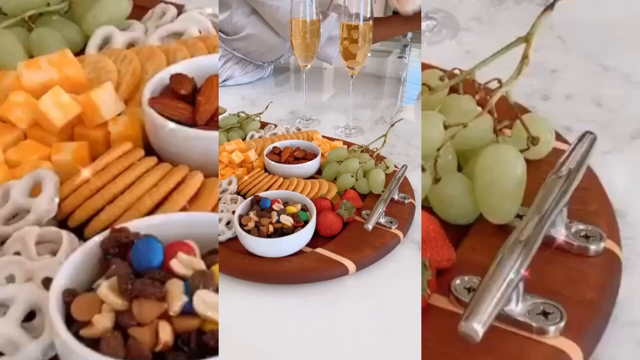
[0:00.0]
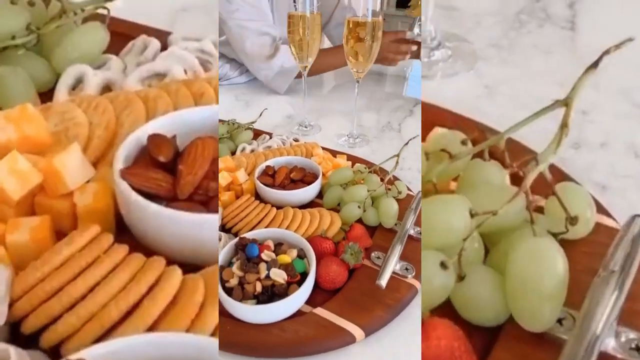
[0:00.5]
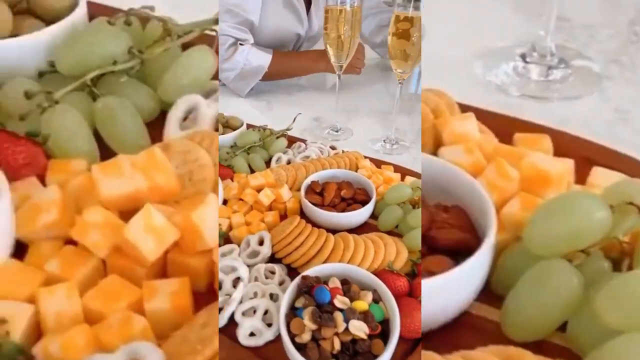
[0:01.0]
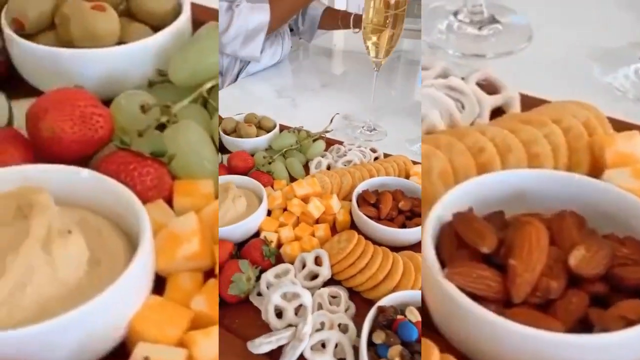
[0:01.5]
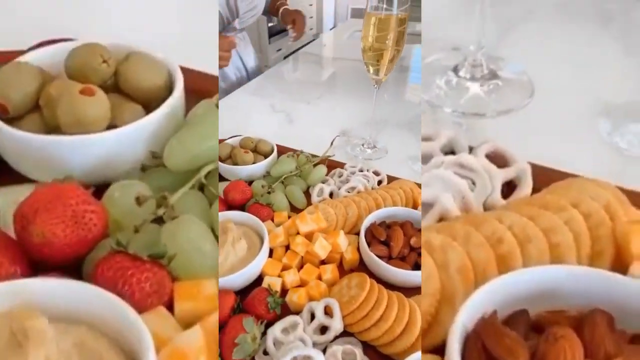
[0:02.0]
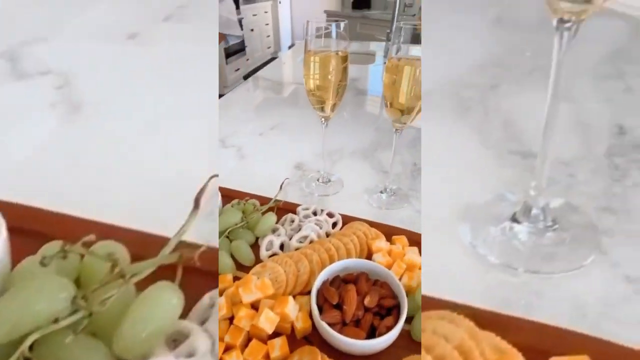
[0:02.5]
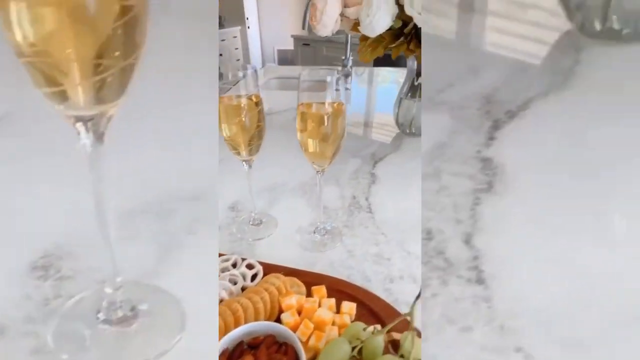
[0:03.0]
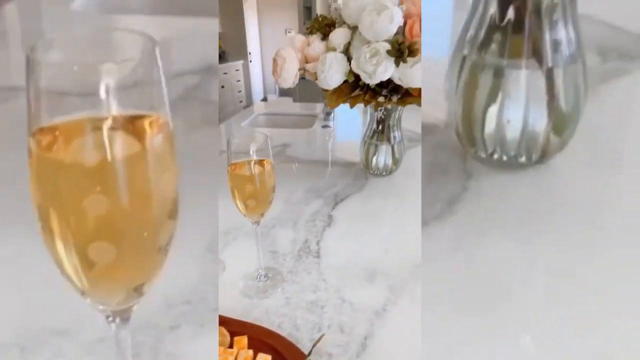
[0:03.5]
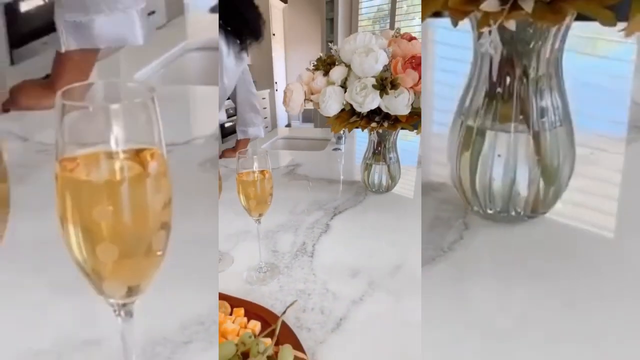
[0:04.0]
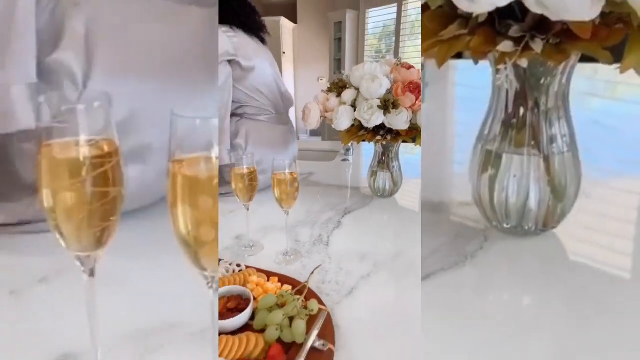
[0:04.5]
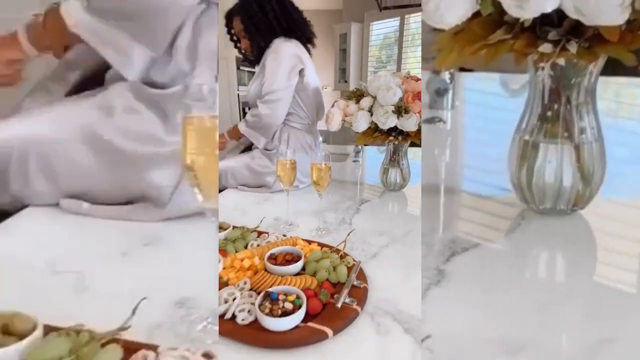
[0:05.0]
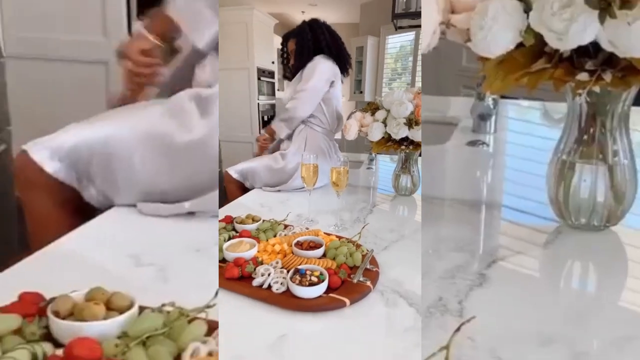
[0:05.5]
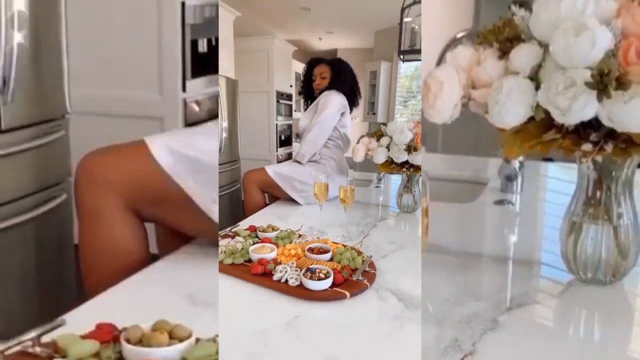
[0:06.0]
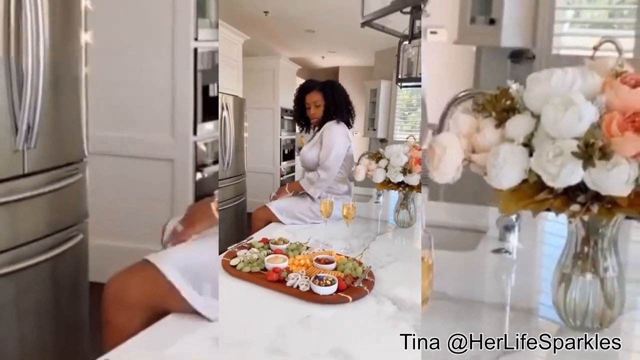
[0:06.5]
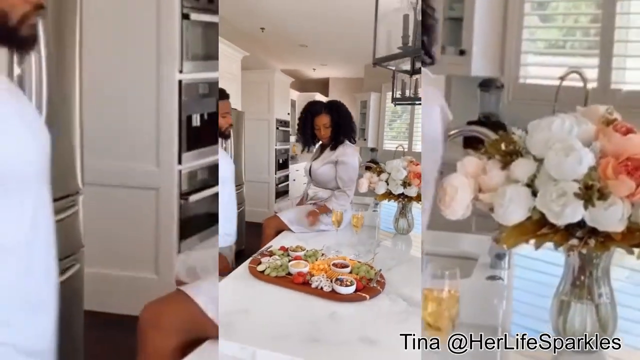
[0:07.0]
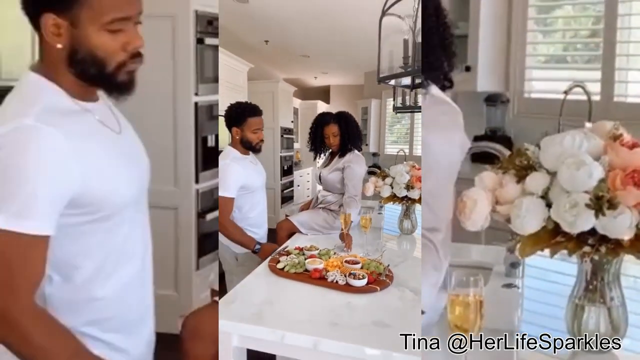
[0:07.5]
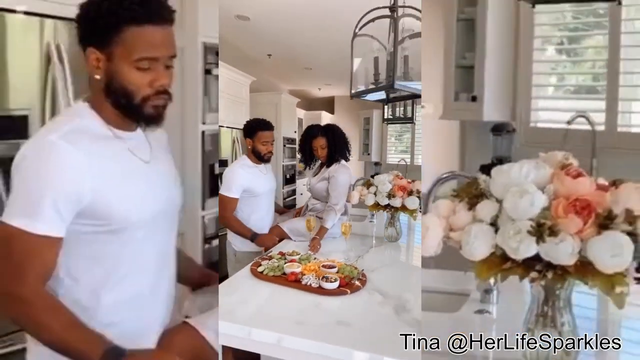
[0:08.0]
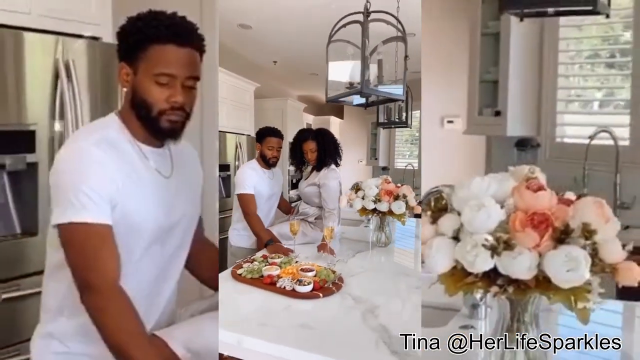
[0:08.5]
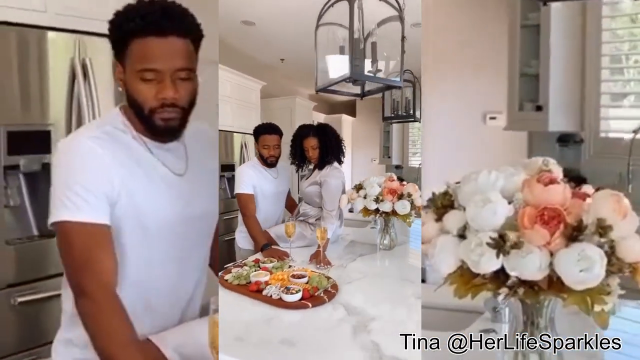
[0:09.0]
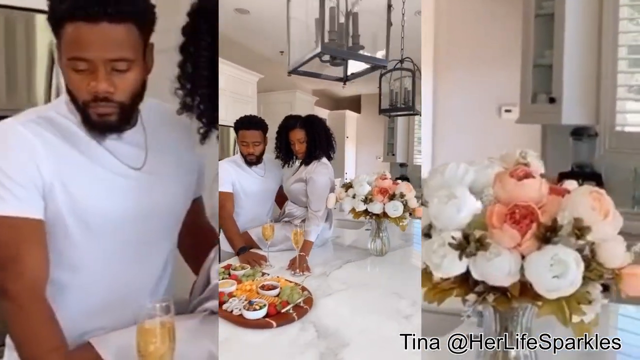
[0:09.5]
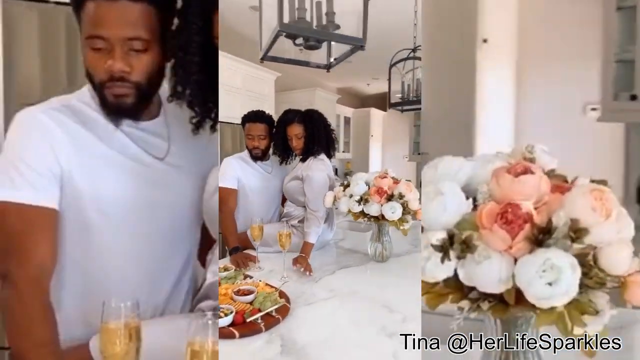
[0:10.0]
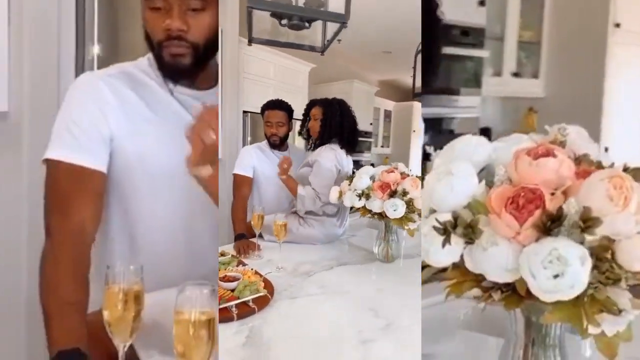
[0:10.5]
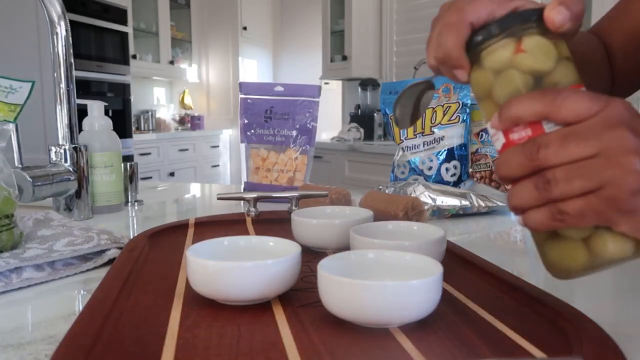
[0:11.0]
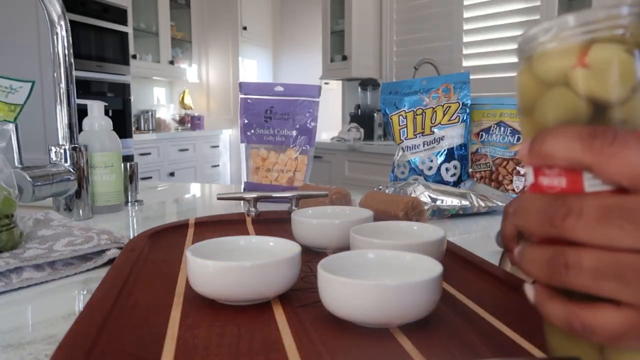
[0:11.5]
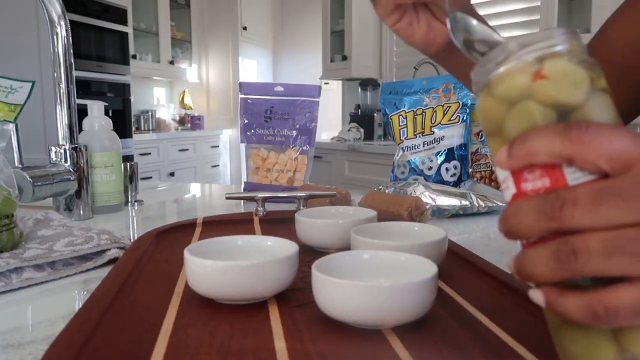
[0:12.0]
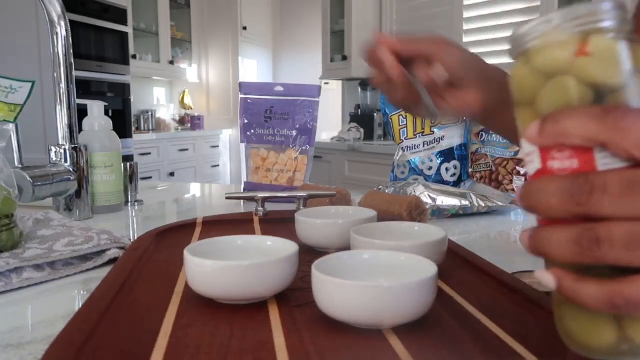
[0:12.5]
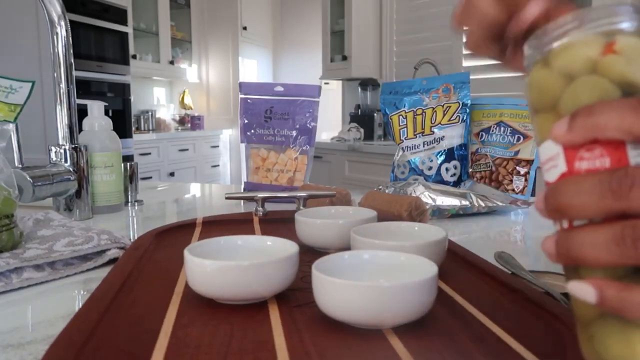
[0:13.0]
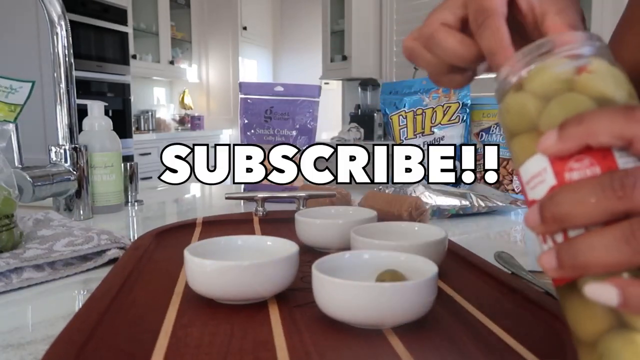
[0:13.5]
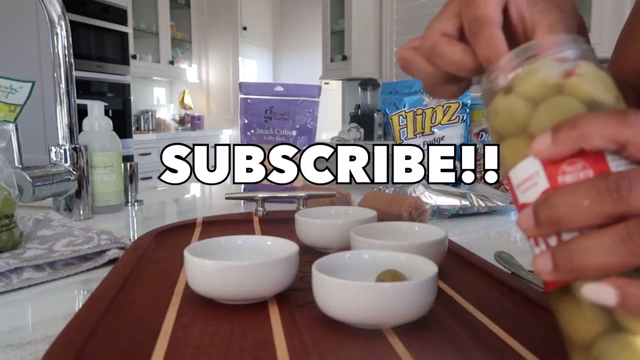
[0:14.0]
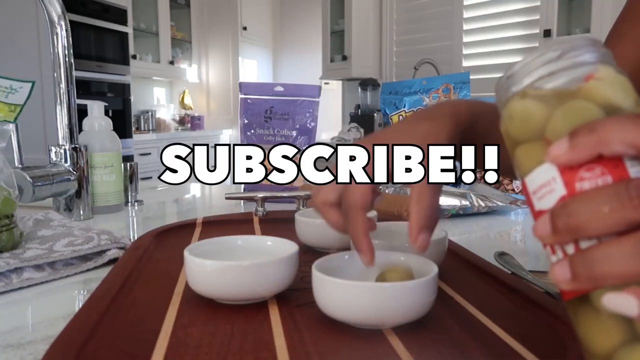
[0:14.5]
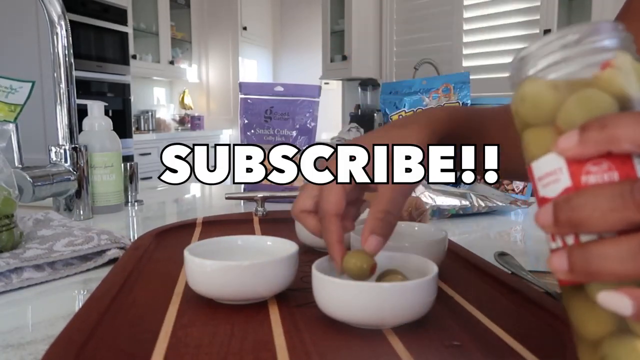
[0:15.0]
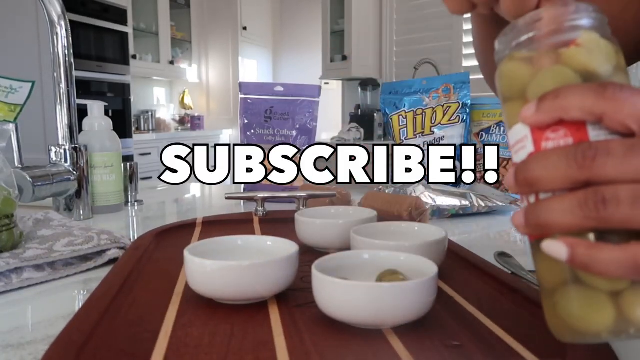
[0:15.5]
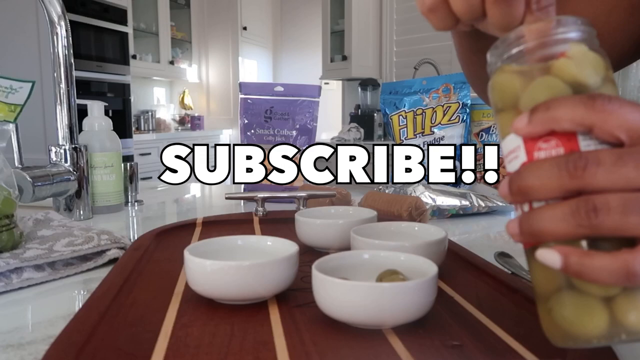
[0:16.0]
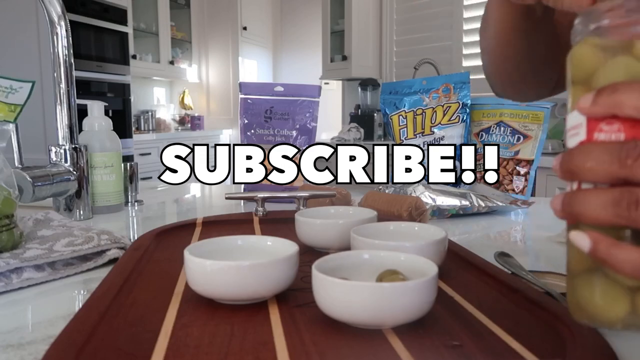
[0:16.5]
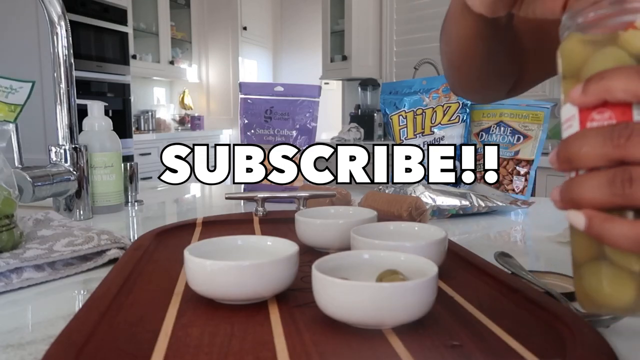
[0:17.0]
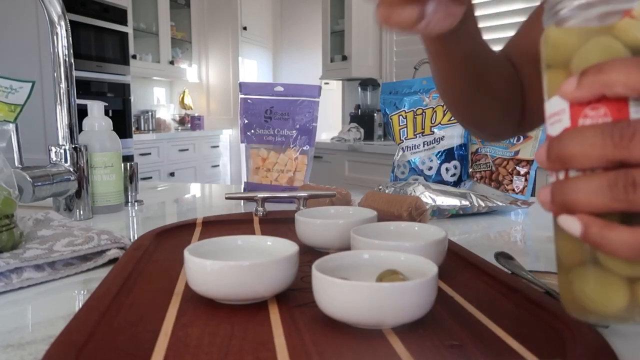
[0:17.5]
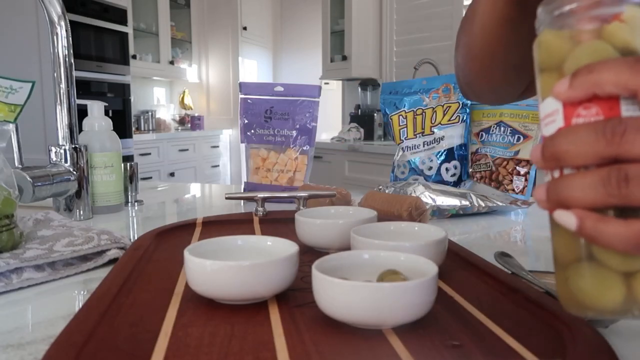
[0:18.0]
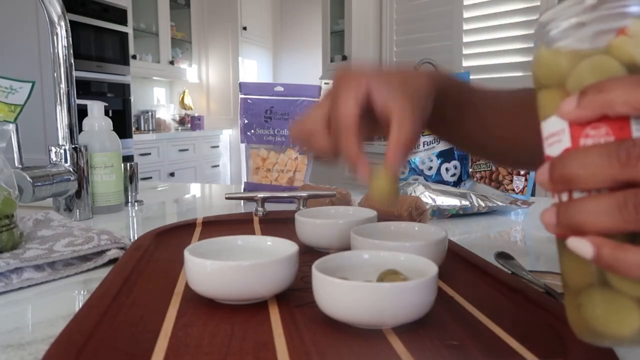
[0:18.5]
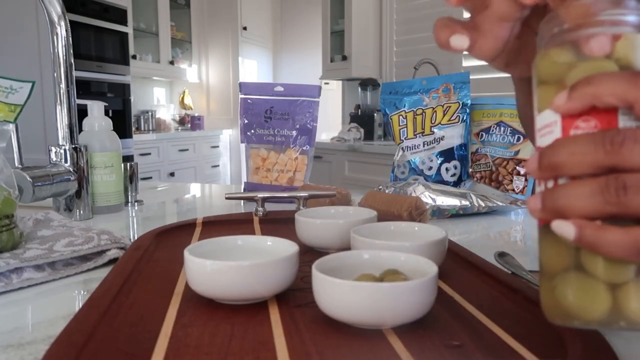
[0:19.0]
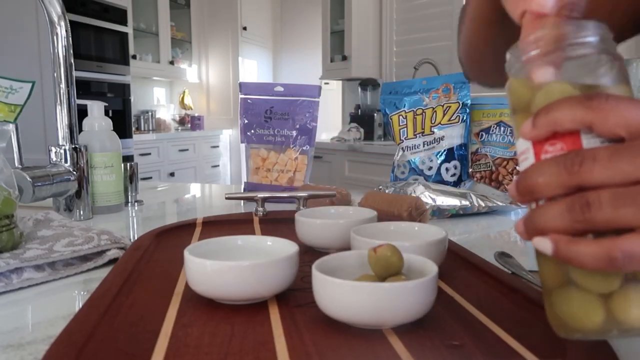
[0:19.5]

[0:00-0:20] A cheese board holds cheese, grapes, pretzels and walnuts, and there is also a board and a spoon. On the kitchen counter are two champagne glasses and flowers, and a lady wears a white gown. A kitchen sink is visible, and a gentleman in a white top has a beard and an afro. There is a double-door silver fridge, along with the oven and the stove. Four containers are shown, and the lady puts olives into them. Chips are on the kitchen counter, apparently what she used to set up the cheese board she is making. The word "subscribe" appears on screen. There is a blender and a kitchen blind. The kitchen is white: white countertops, a white blind and a white ceiling. There is also a lamp or chandelier.